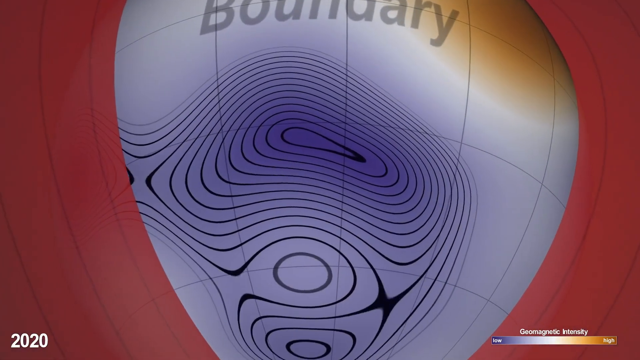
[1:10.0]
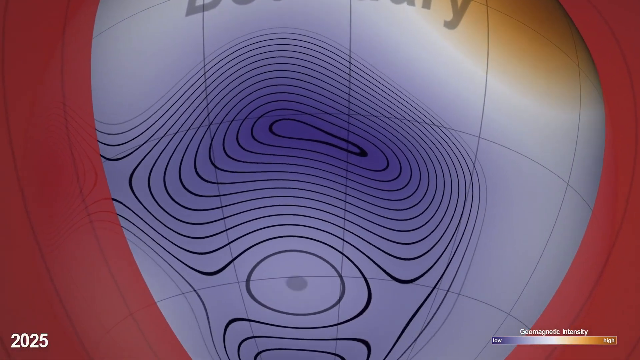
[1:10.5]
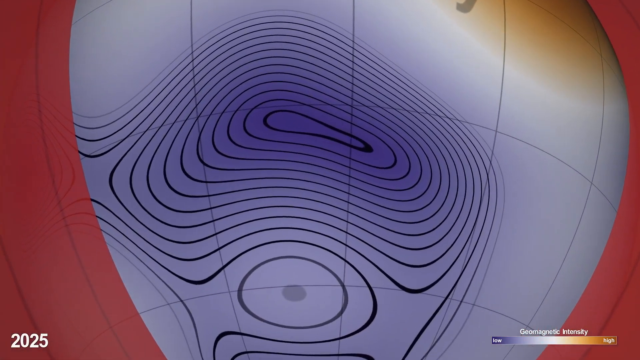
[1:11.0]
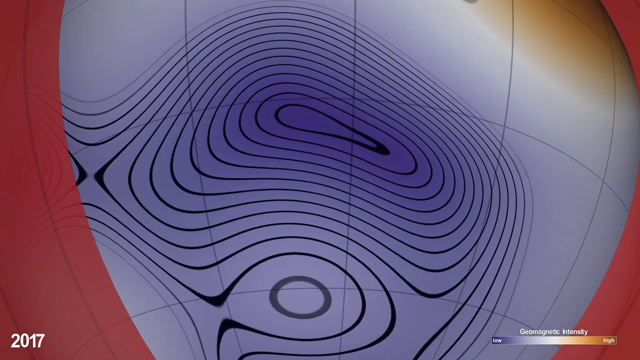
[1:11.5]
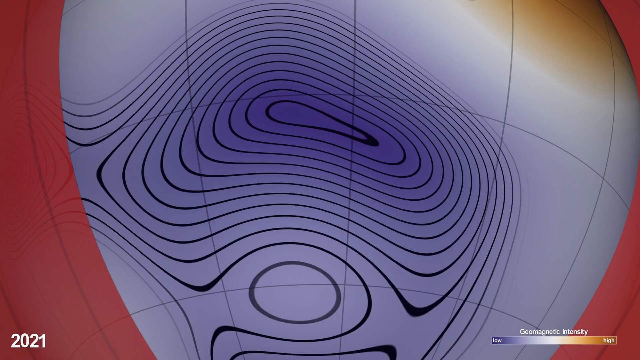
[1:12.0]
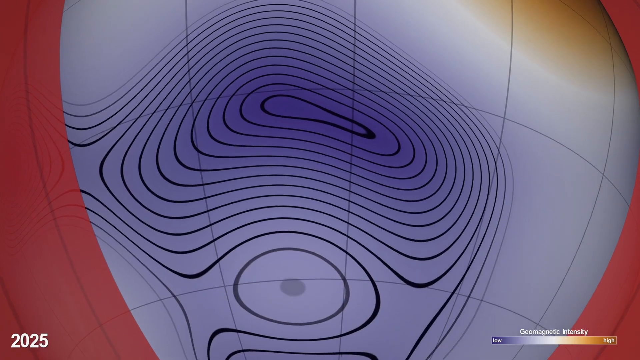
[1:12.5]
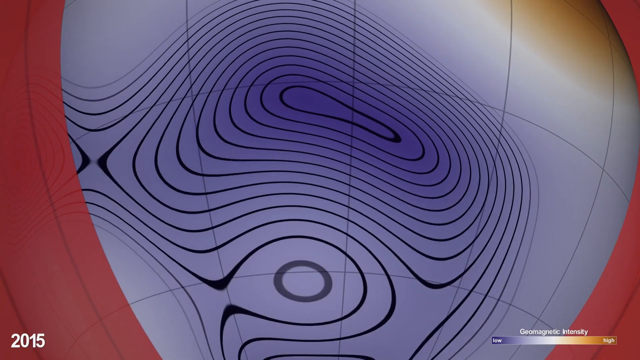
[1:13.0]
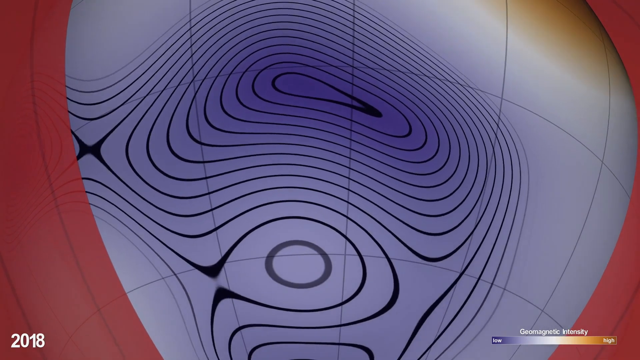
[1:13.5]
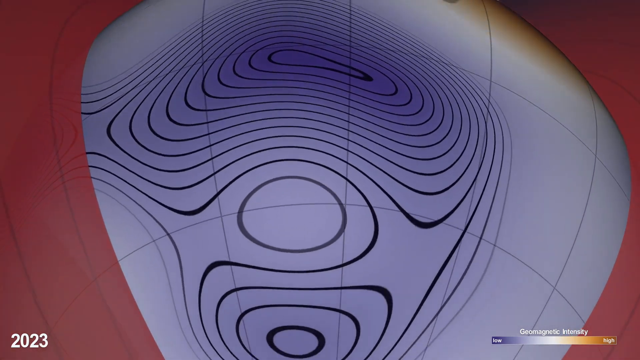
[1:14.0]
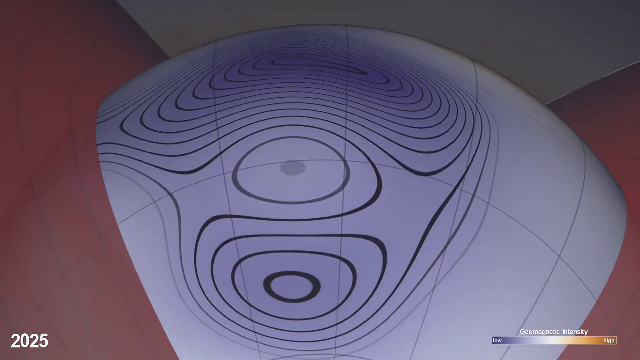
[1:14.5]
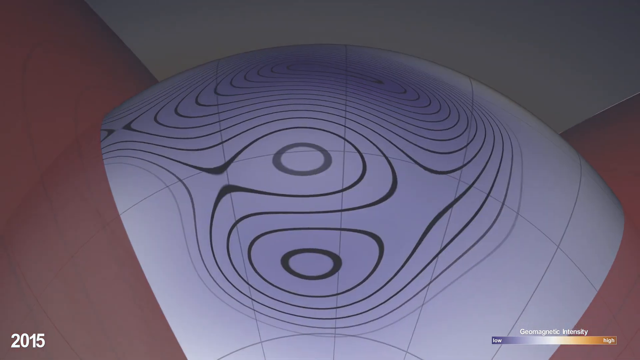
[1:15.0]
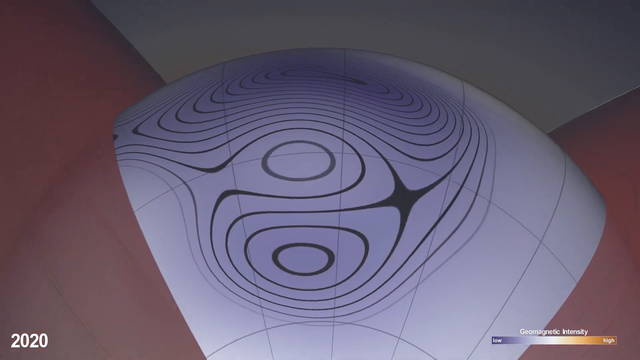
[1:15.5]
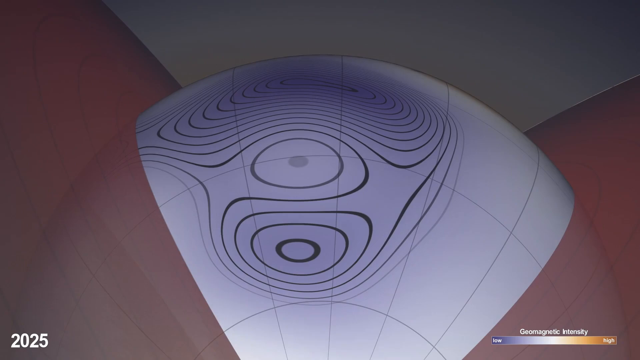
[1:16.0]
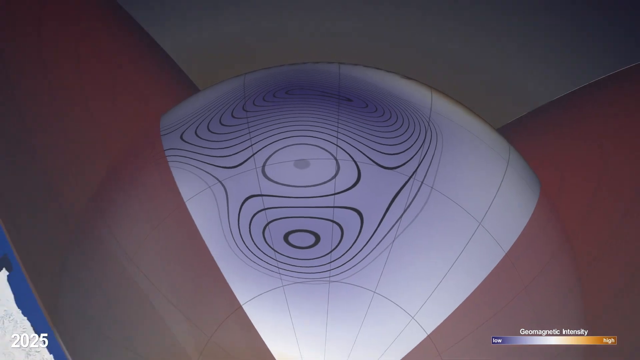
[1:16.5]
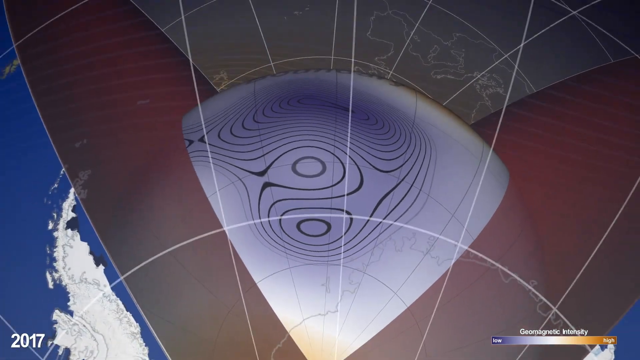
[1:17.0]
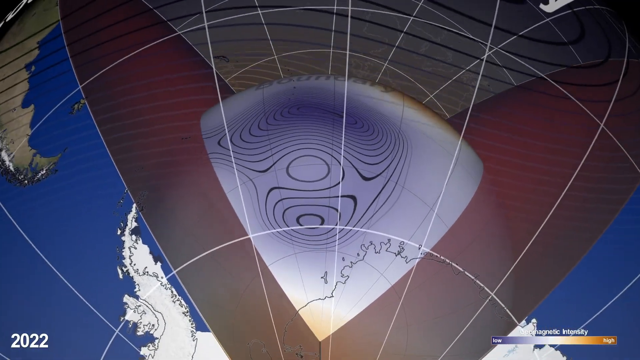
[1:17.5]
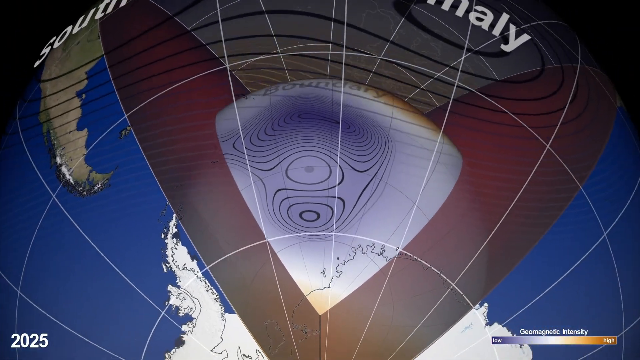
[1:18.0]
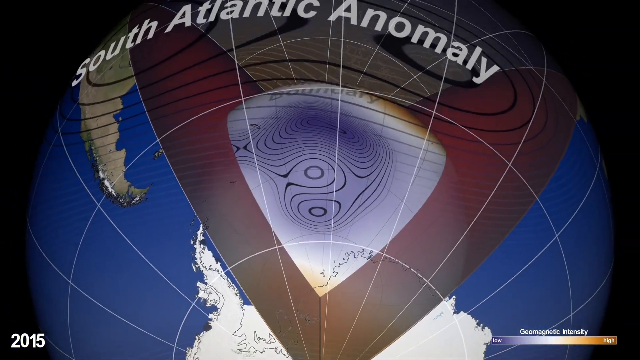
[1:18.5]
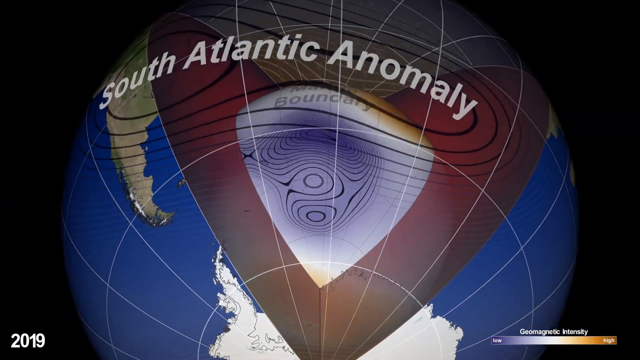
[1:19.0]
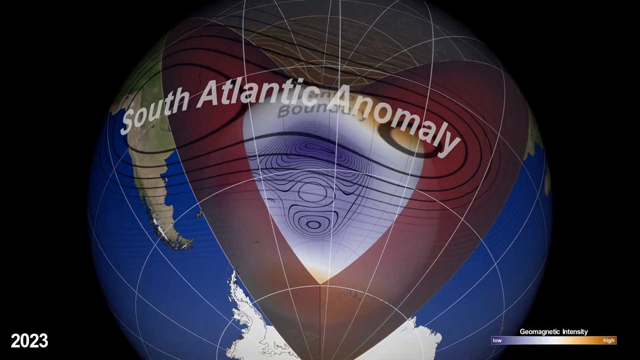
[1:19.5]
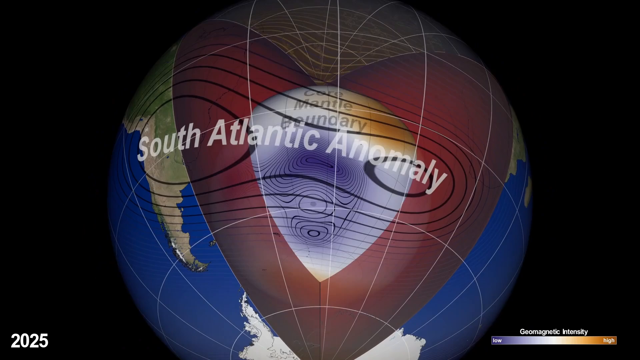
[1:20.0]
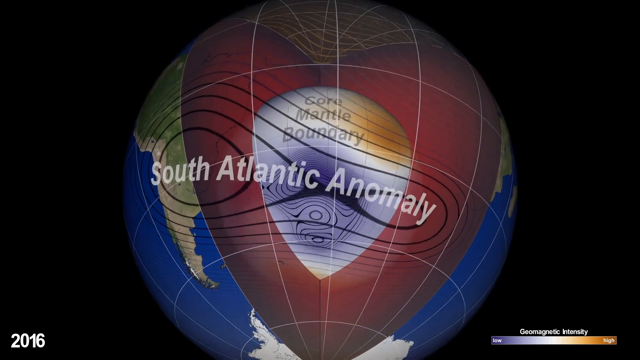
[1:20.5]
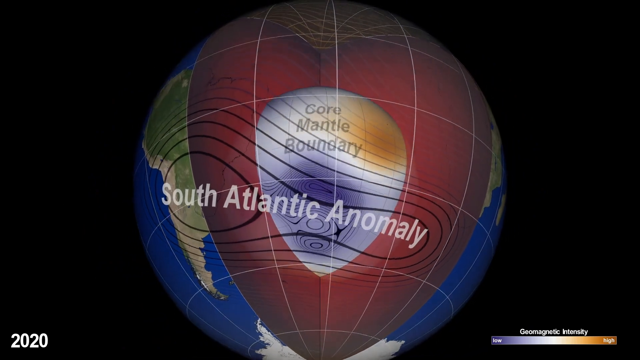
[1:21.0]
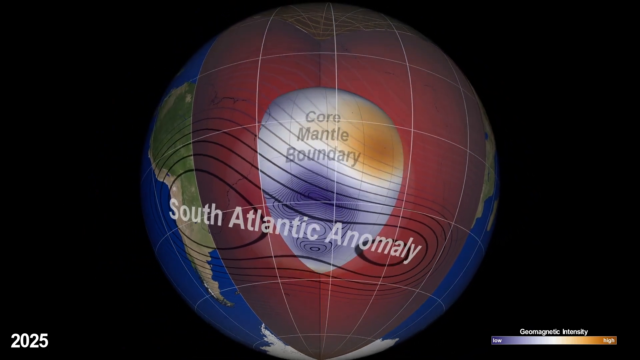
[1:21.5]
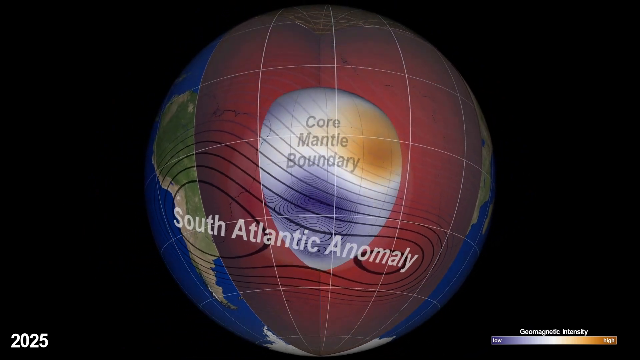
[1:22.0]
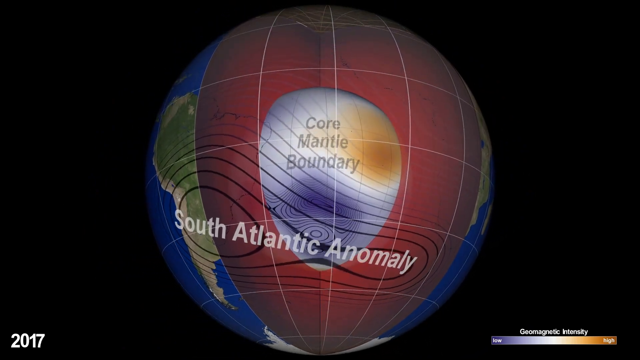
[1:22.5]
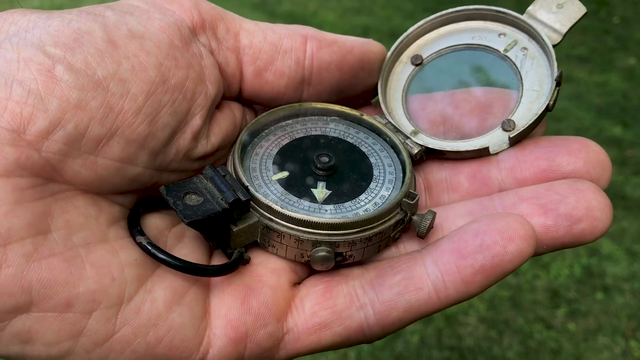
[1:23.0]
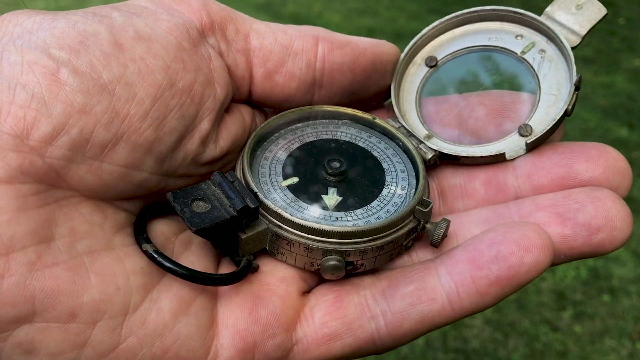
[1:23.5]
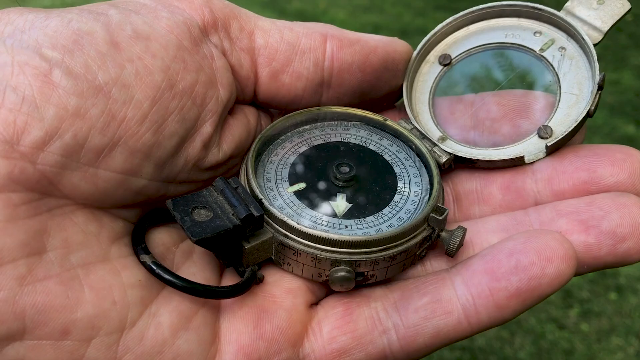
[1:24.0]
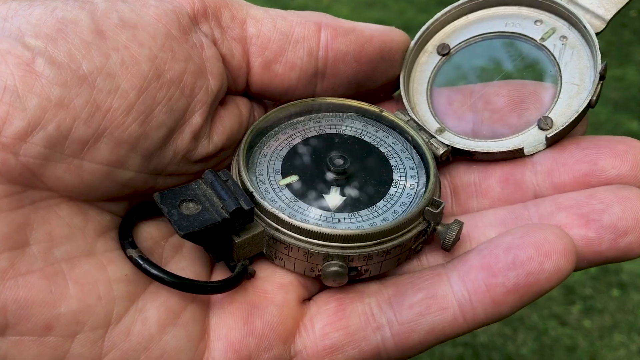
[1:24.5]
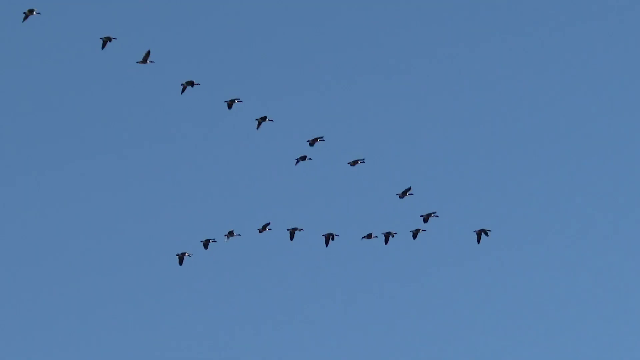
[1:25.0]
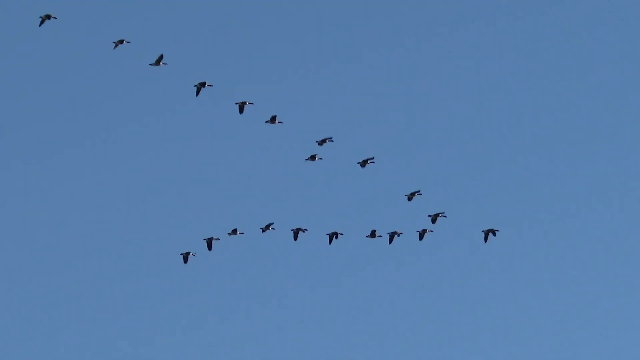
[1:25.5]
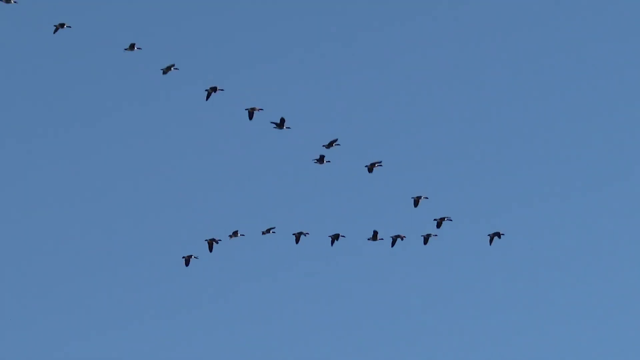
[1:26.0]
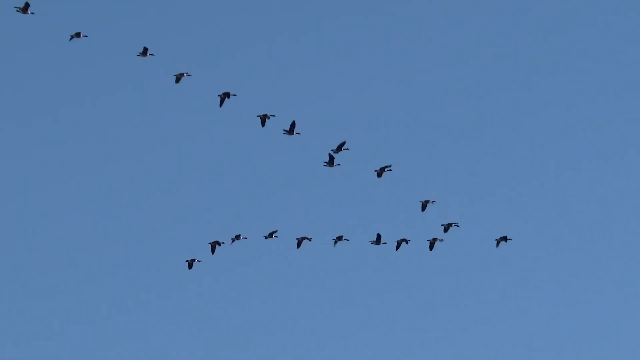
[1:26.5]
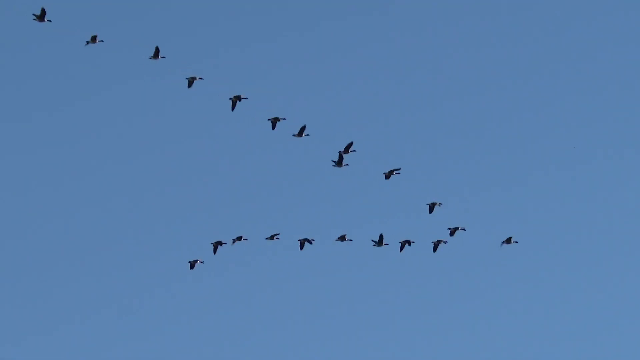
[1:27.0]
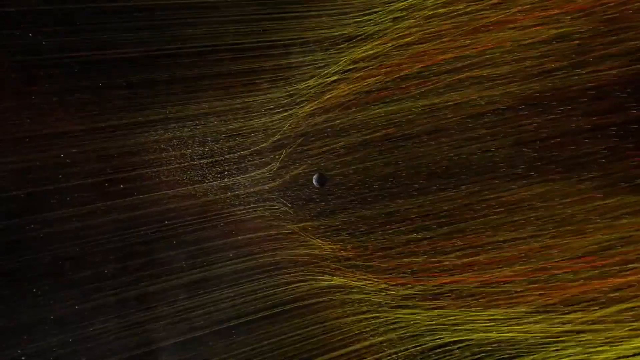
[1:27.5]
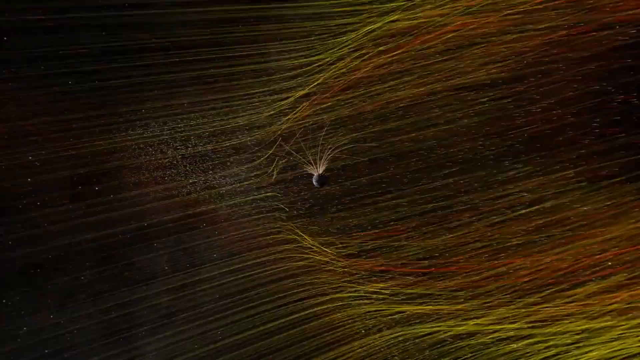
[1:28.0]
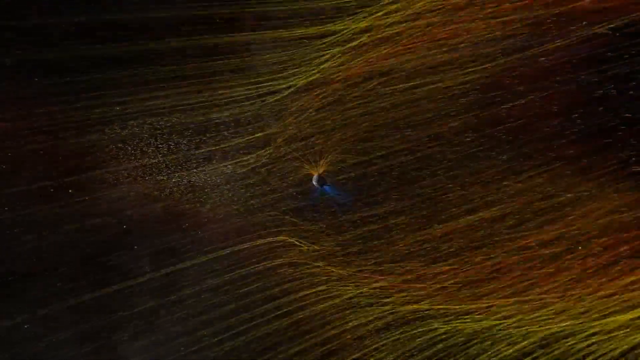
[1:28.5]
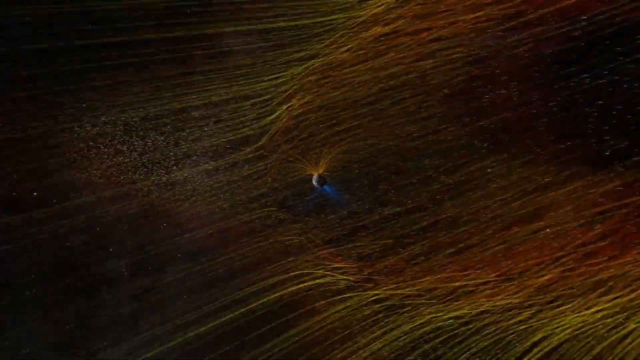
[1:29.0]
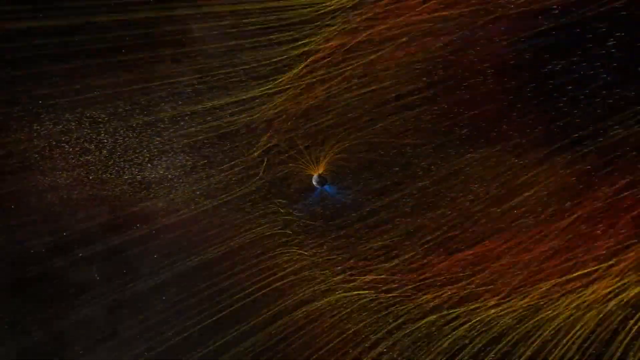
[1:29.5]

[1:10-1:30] The view is zoomed in on a grey area surrounded by a red outline, with a pattern of circular black lines inside it rippling and moving. The video pans out a bit, showing that the grey inner area is circular with a curved surface, and as it continues to zoom out, the image turns out to be the inside of planet Earth: the grey area deep inside, surrounded by red, and the outer surface with blue water and continents including South America and Antarctica. White grid lines curve around the Earth's surface, and toward the top of the screen, over South America and surrounded by circular black lines, the words "South Atlantic Anomaly" are written in white. The video zooms out and pans upward, showing the inside of Earth in red, with the grey portion labeled "core mantle boundary". Next, someone's left hand, apparently belonging to a Caucasian person, holds an old-fashioned compass. Then a flock of Canada geese flies in a V formation across a light blue sky. Finally, what looks like a planet with grid lines around it is surrounded by moving red particles.